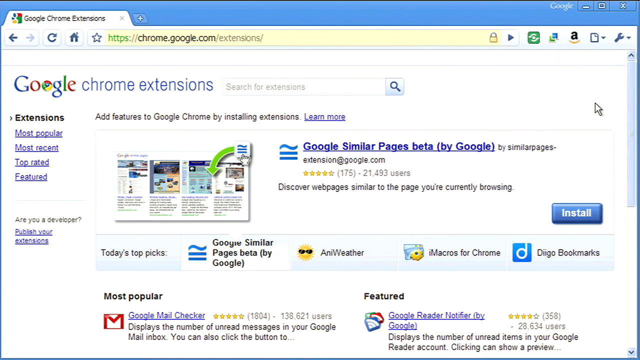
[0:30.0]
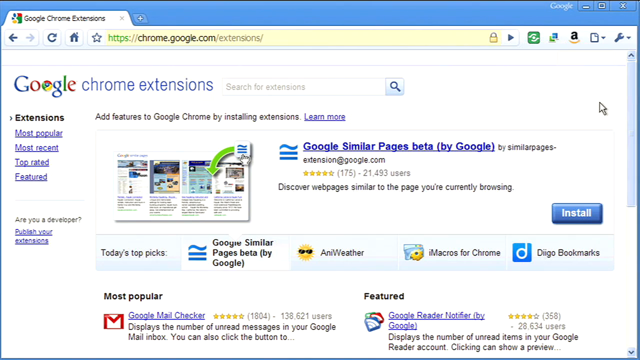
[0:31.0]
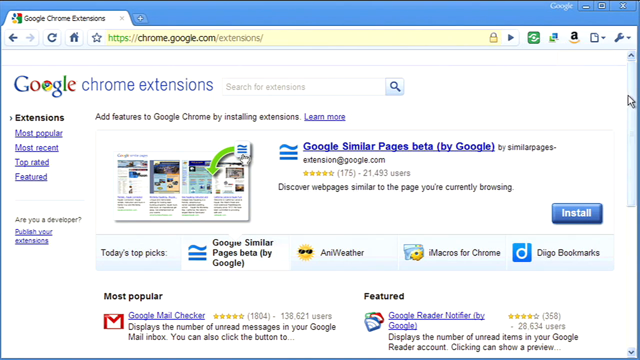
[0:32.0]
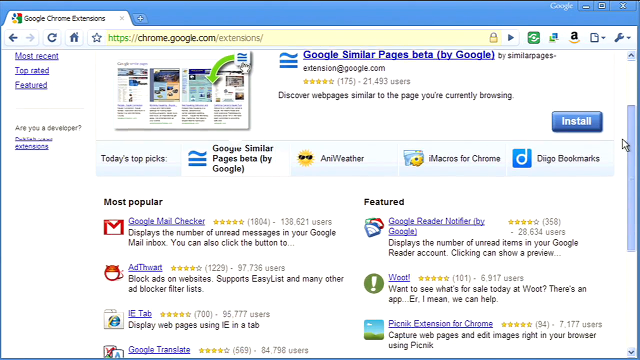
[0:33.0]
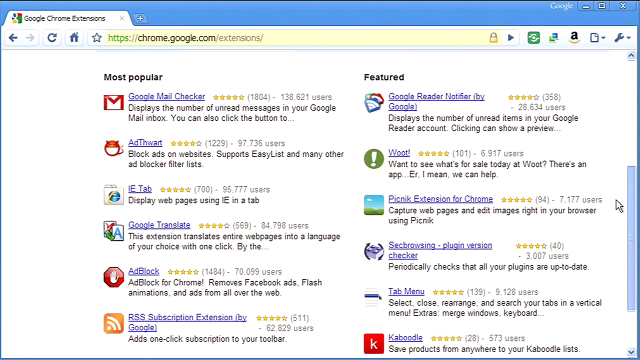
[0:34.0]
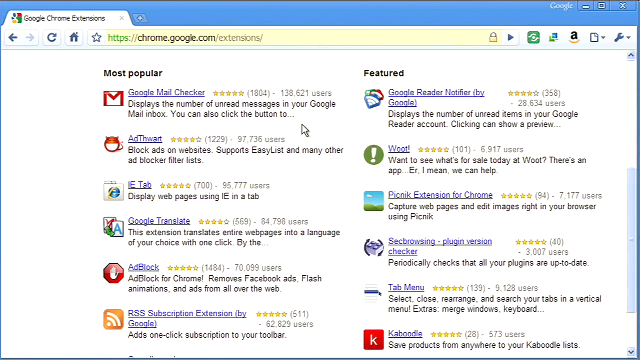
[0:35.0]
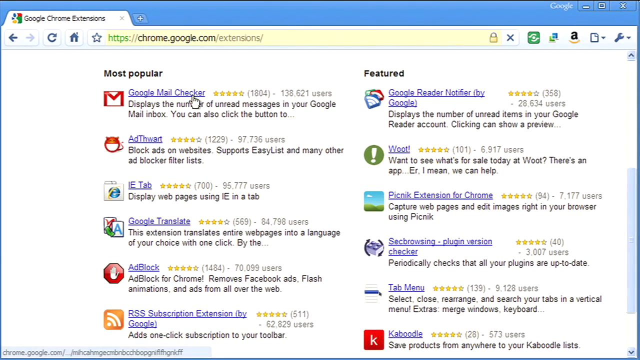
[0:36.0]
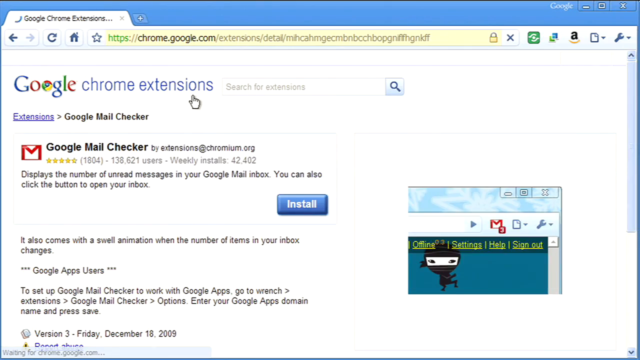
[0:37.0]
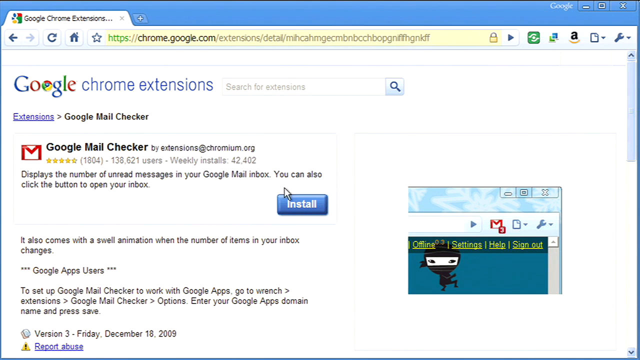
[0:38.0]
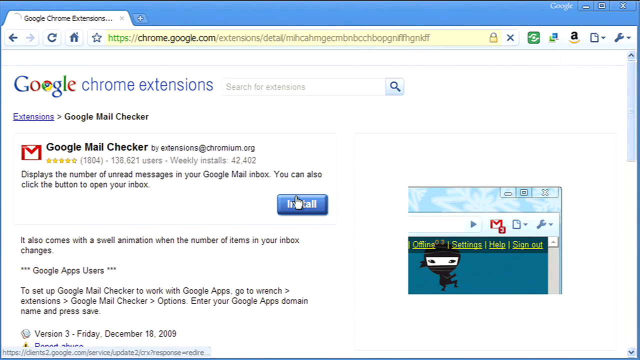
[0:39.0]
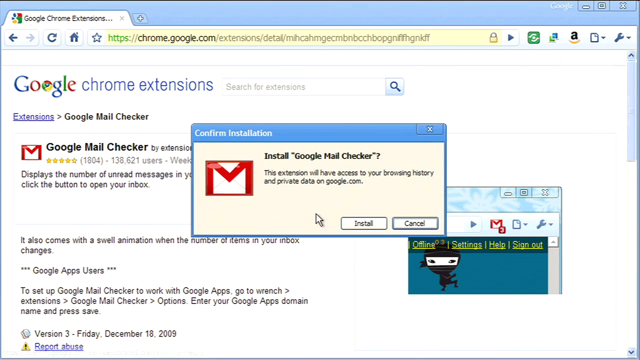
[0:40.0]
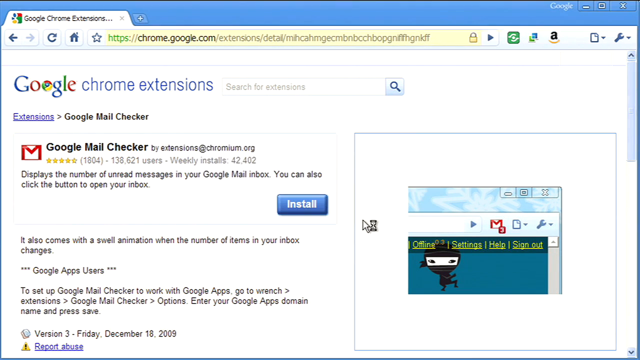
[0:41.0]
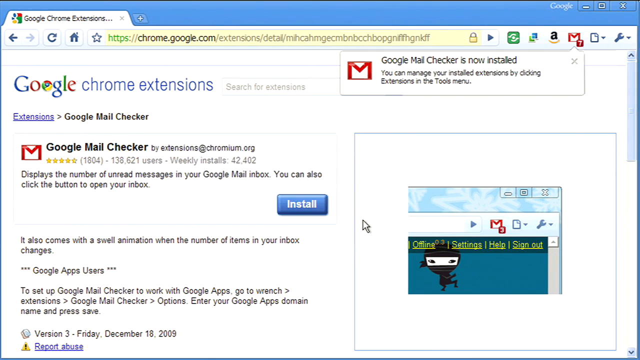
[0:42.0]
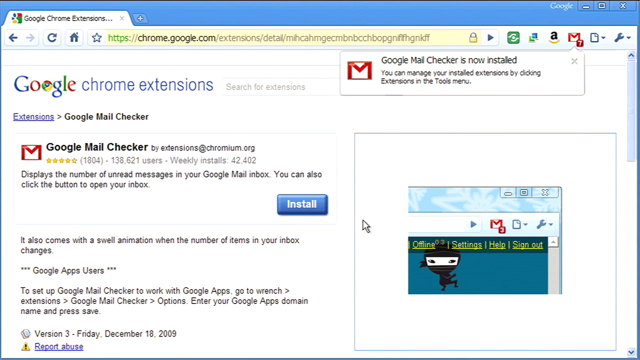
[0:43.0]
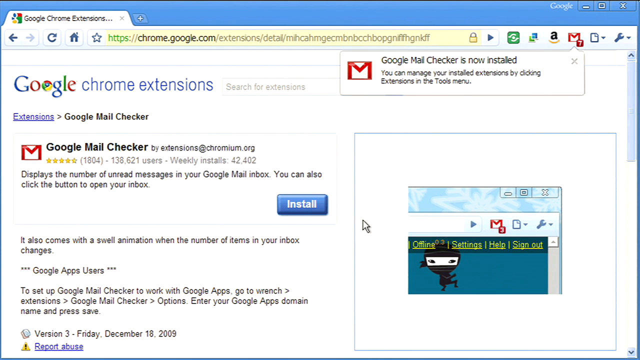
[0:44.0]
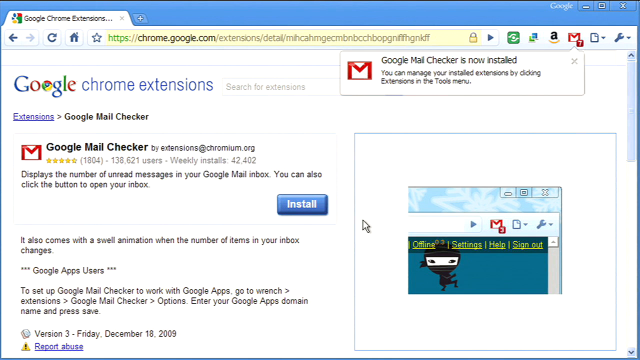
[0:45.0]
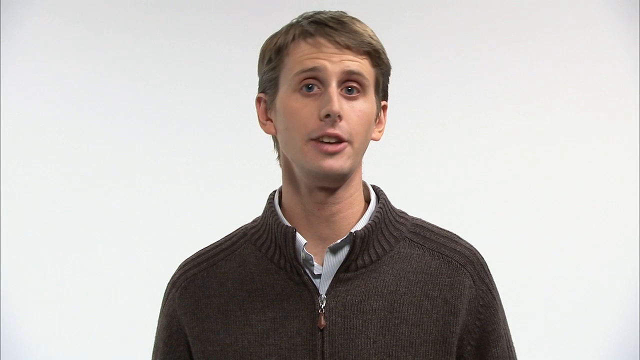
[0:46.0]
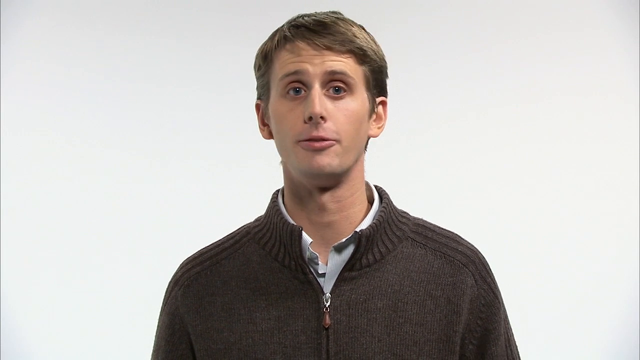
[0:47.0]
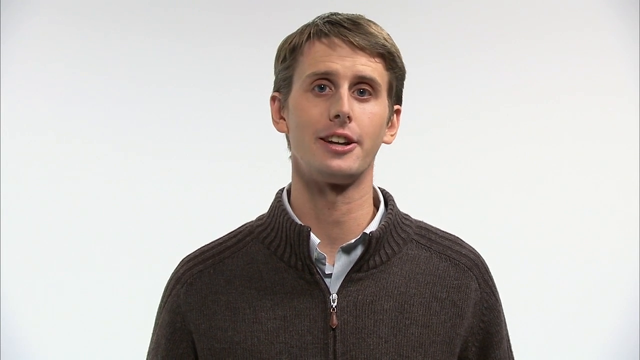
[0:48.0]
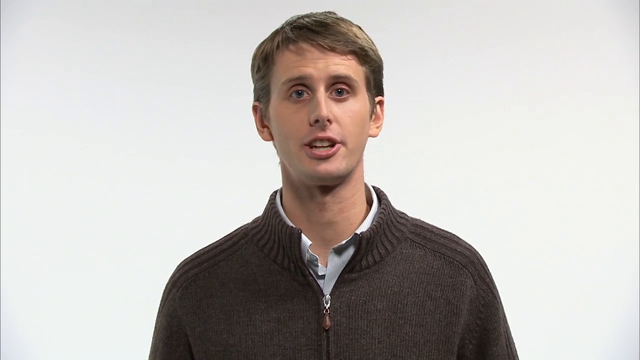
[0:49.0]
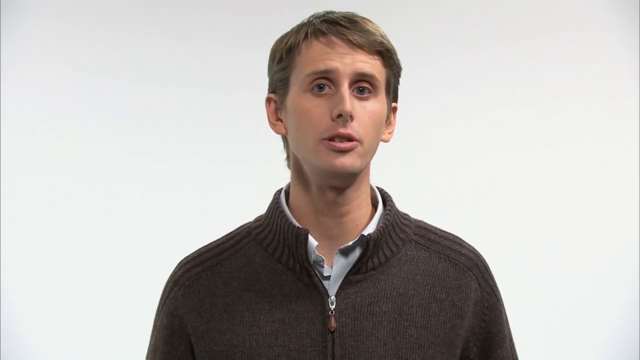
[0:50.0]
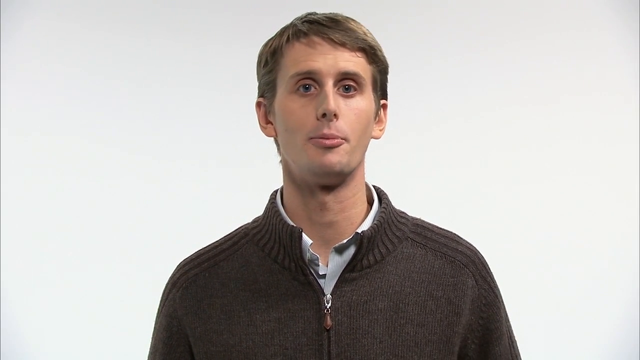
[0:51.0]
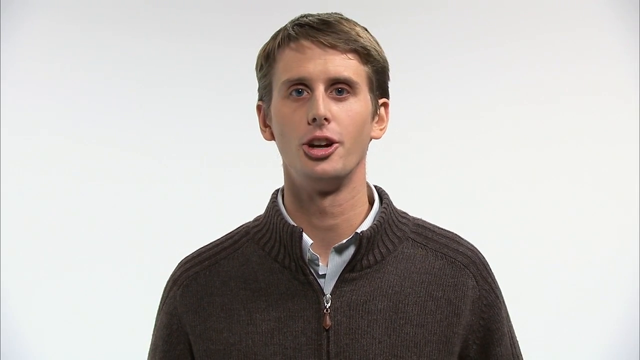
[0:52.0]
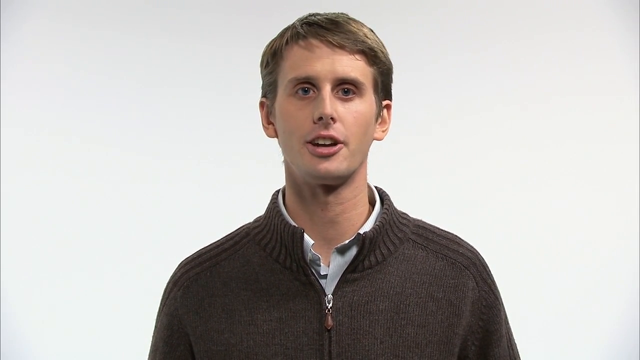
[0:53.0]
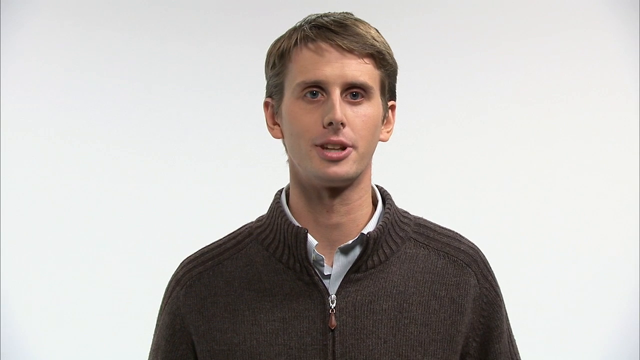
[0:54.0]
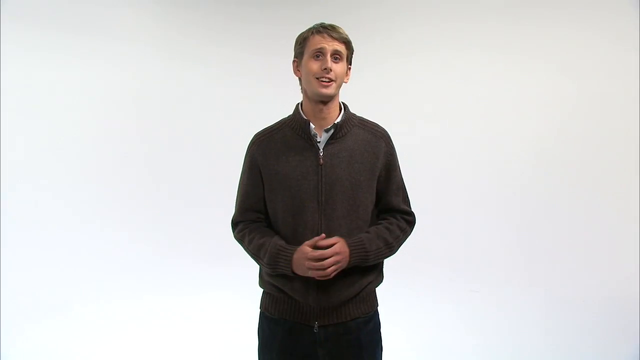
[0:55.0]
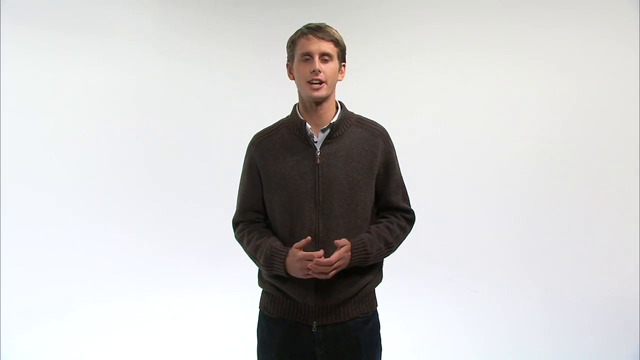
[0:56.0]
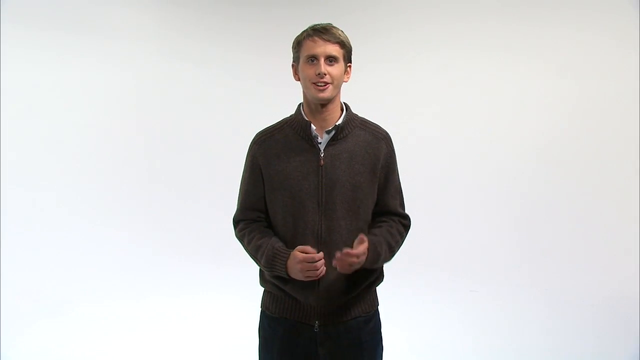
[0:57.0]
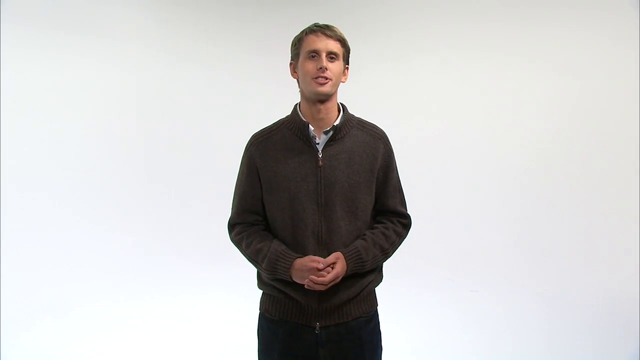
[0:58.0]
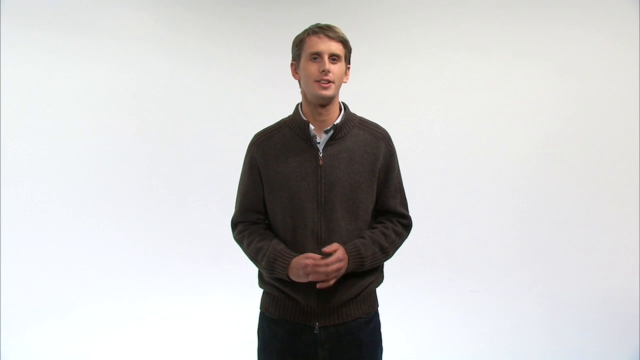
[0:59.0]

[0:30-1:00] A computer screen shows the address bar at the very top reading chrome.google.com/extensions, the extensions page of the Google website. The Google logo is in the upper left corner, the page says "Chrome extensions", and it shows one of the extensions that can be installed, called "Google Similar Pages Beta", by Google, with a button that says "install" in the bottom right corner. A mouse cursor grabs the scroll bar on the right side, pulls it down, and moves over to a mail icon called the Google Mail Checker. Another page, Google Chrome Extensions Google Mail Checker, shows the install button for the Google Mail Checker. The cursor goes down to the install button in the corner and clicks it, and a message pops up that says "confirm installation", "install Google Mail Checker", "This extension will have access to your browsing history and private data on google.com." The person clicks install, and in the upper right corner of the tab a box appears with an image of an envelope saying Google Mail Checker has been installed and "you can manage your installed extensions by clicking extensions in the tool menu." The video then goes to a man speaking directly to the camera with a slight smile, moving his head a lot. The camera zooms out to his full body as he keeps talking to the camera and puts his hands together.